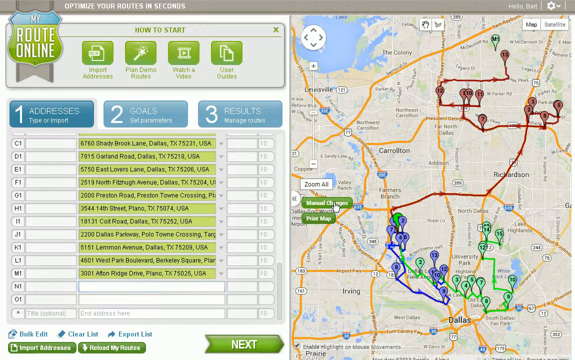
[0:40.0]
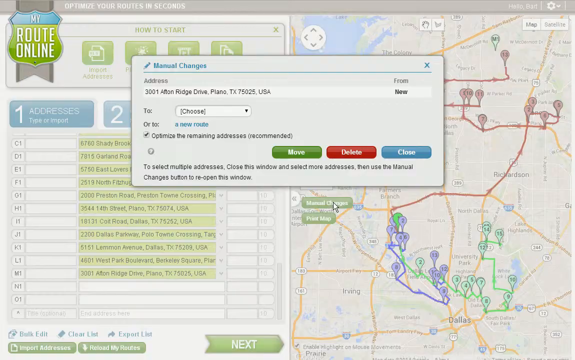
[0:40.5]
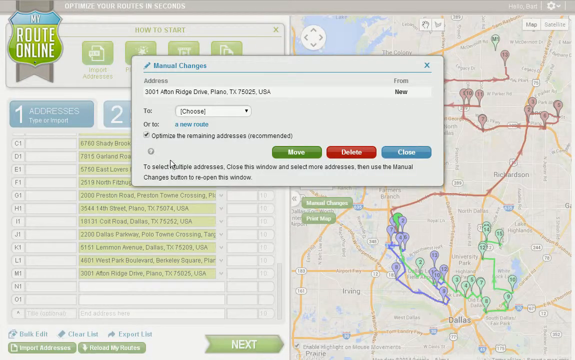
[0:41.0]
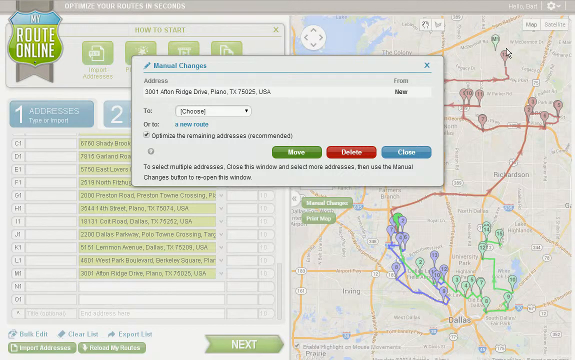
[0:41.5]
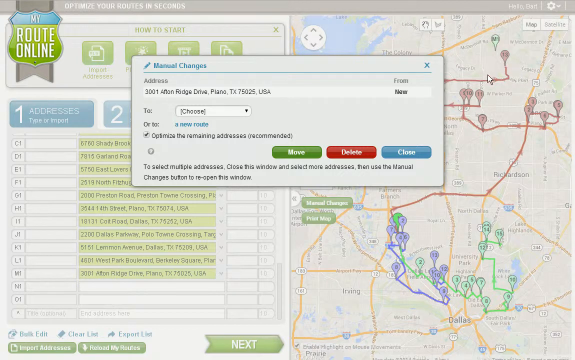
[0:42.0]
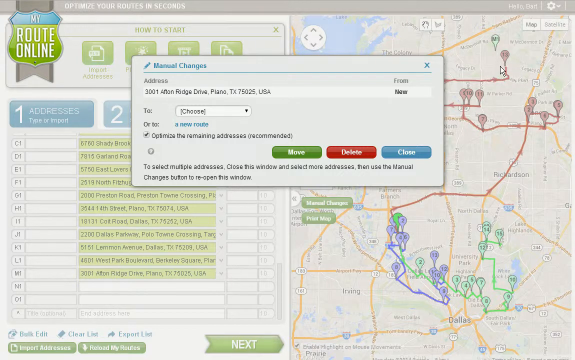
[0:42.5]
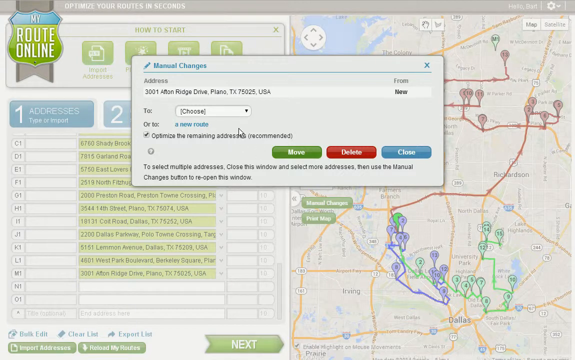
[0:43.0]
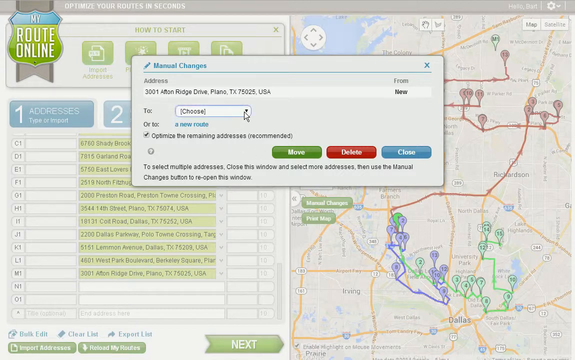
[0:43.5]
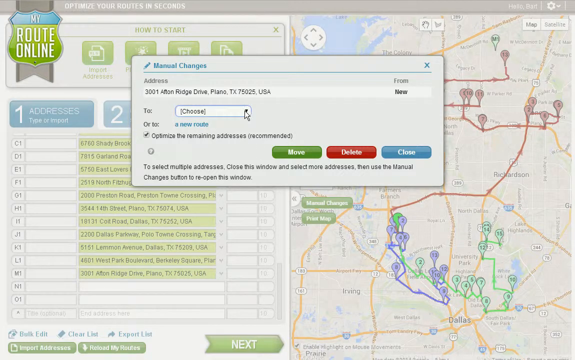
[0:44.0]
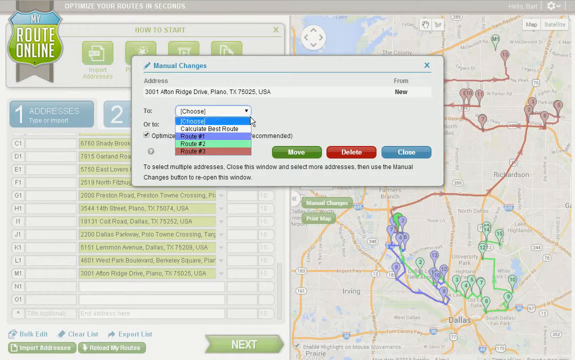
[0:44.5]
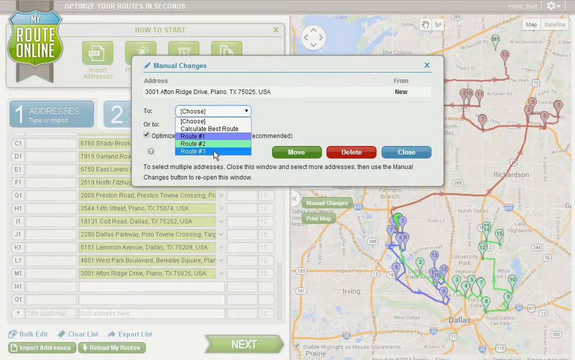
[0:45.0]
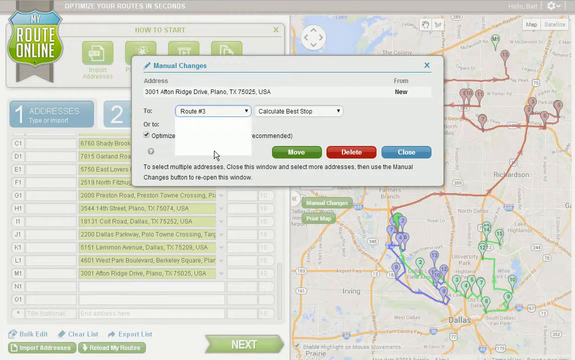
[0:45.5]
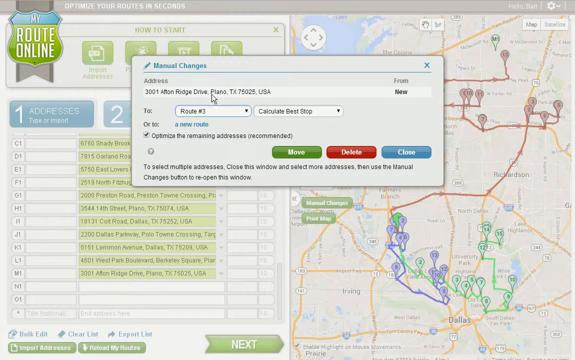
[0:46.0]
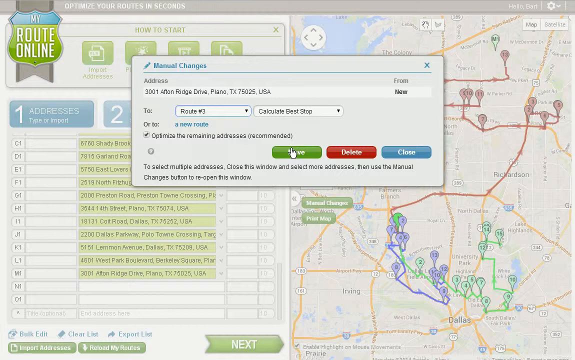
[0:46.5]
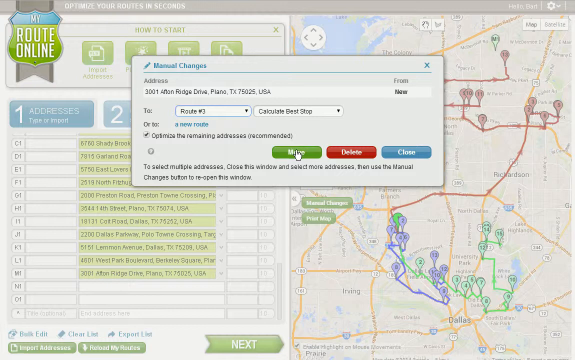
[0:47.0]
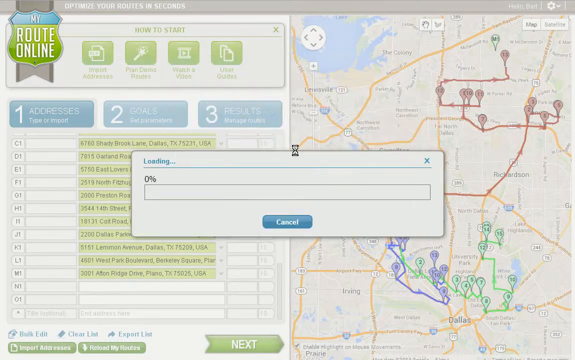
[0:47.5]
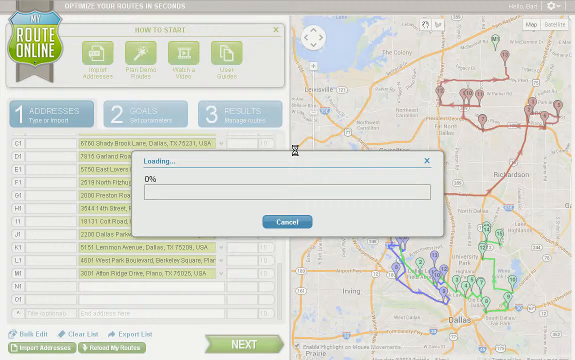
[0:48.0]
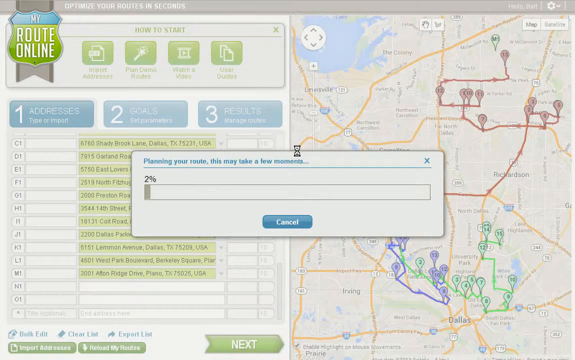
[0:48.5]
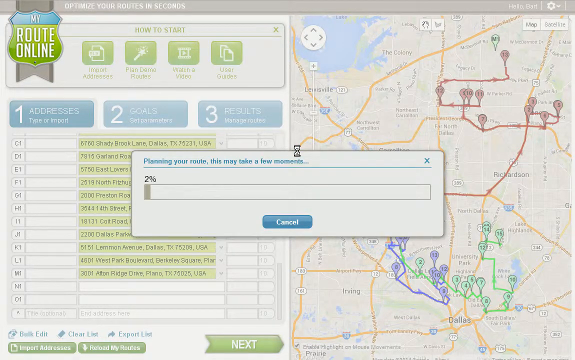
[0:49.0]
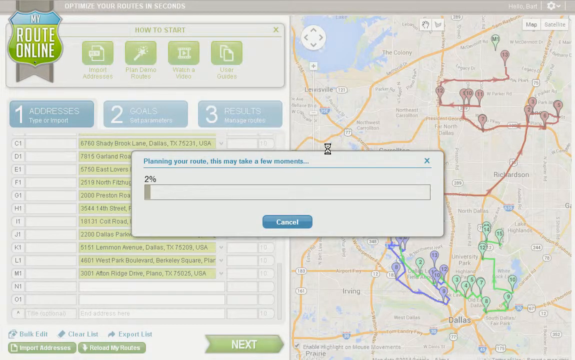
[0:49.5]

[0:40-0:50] A manual changes box appears in the middle of the screen. A list of the routes is pulled down, and the route to add the address to is chosen, changing it from the green route it is currently in to the red route, which is closer to its location.